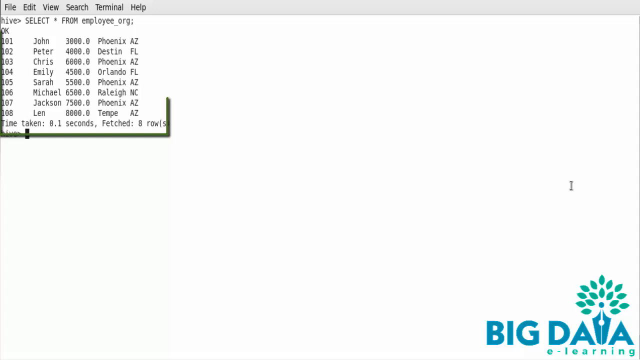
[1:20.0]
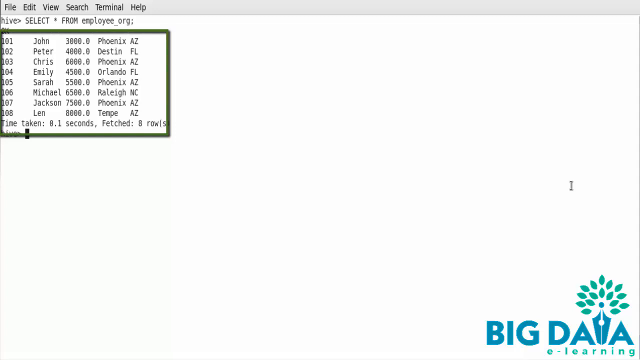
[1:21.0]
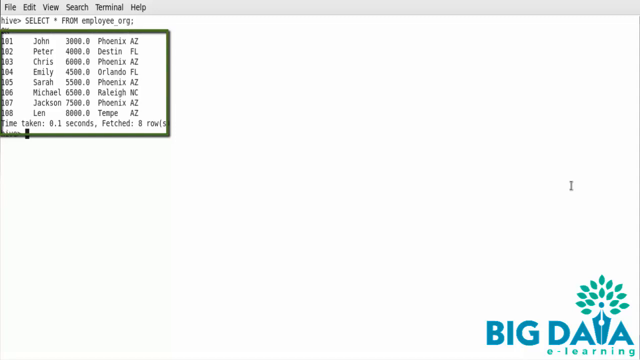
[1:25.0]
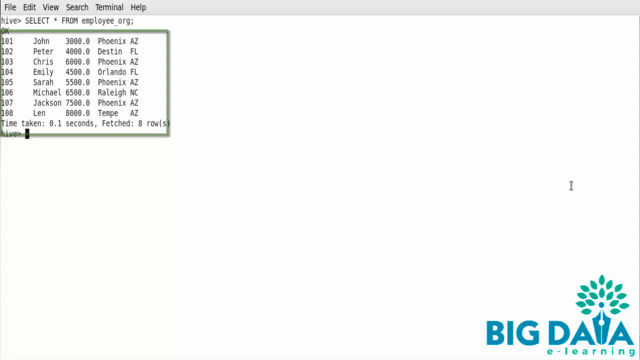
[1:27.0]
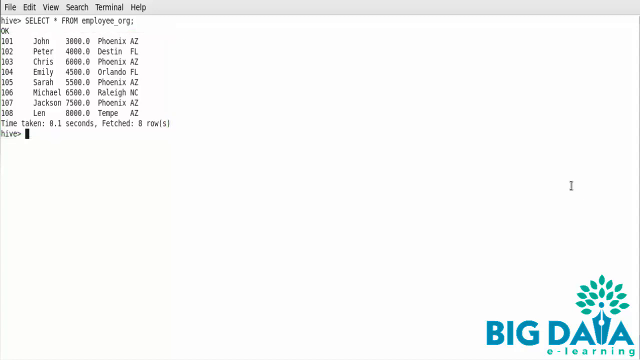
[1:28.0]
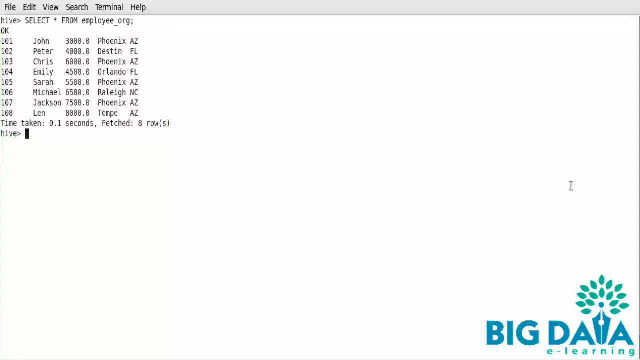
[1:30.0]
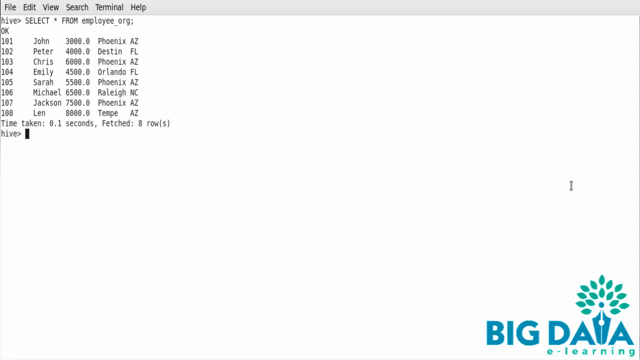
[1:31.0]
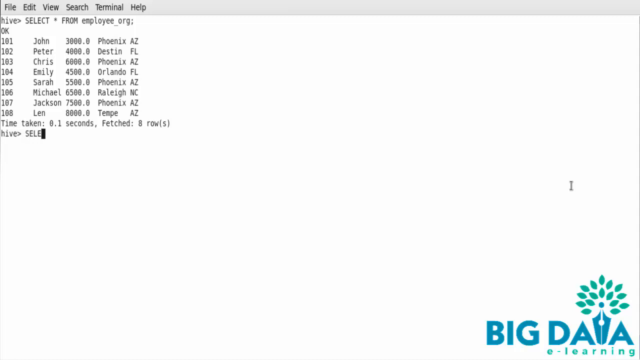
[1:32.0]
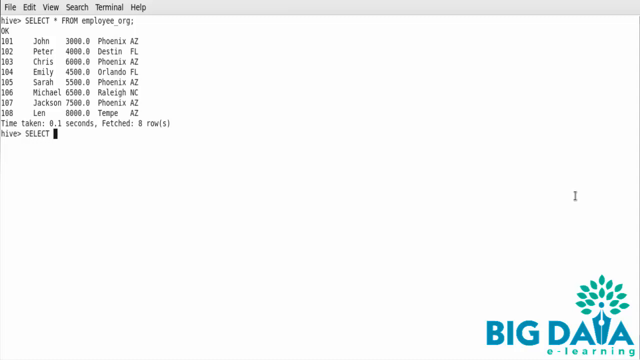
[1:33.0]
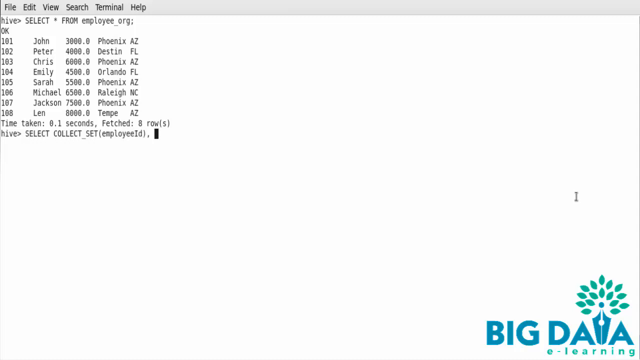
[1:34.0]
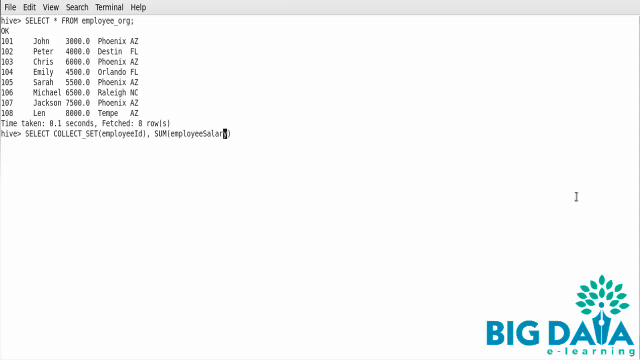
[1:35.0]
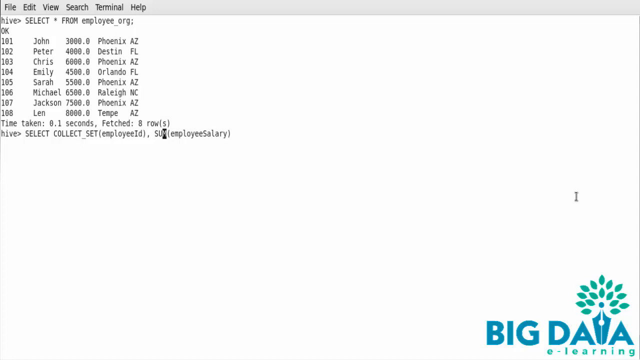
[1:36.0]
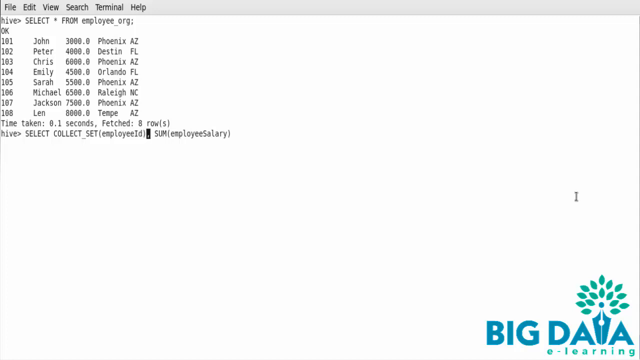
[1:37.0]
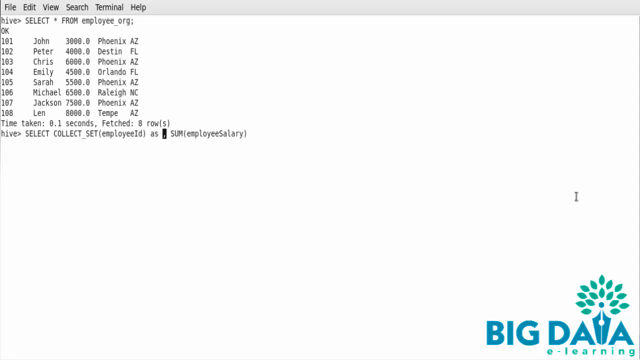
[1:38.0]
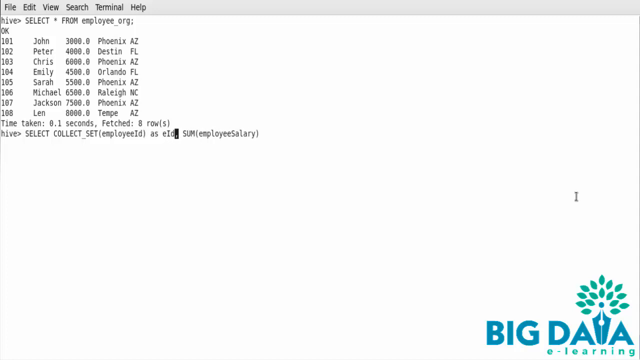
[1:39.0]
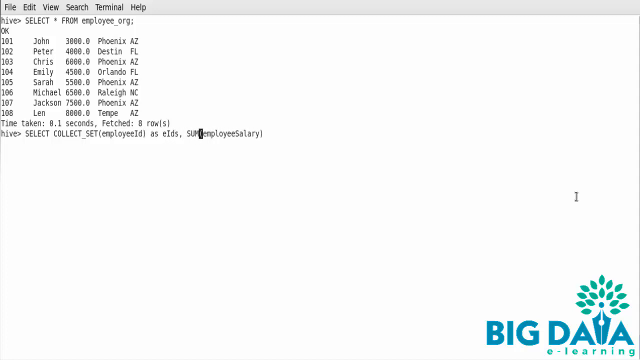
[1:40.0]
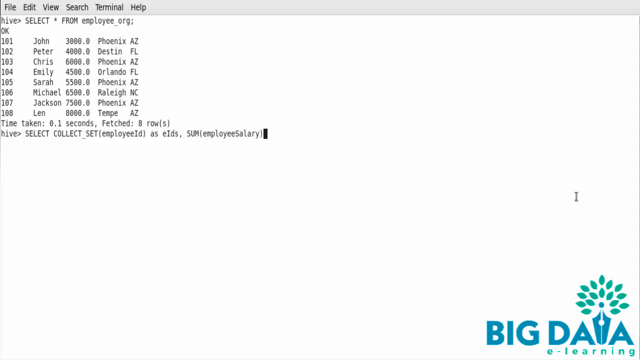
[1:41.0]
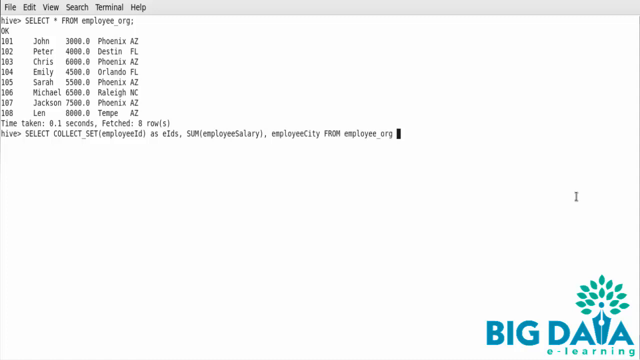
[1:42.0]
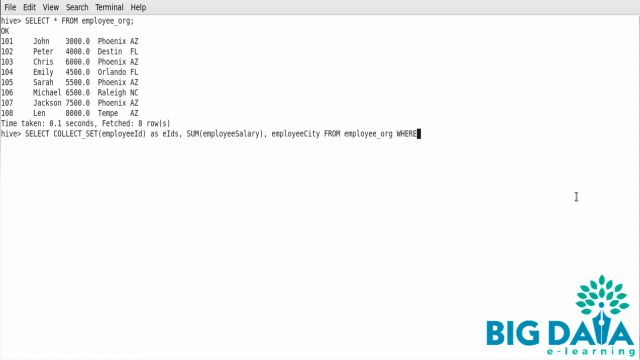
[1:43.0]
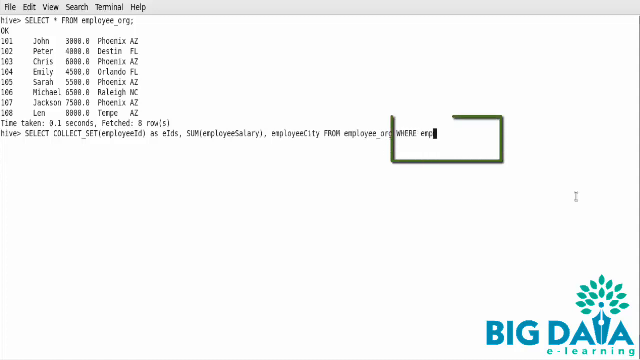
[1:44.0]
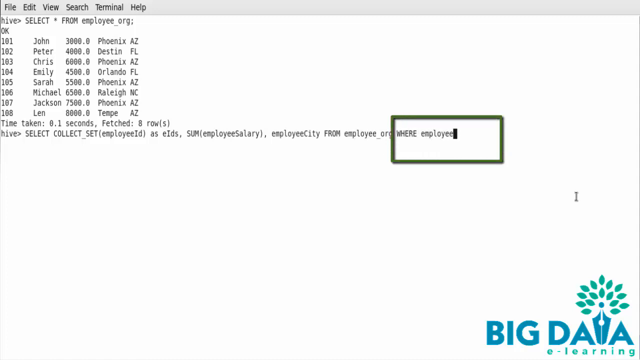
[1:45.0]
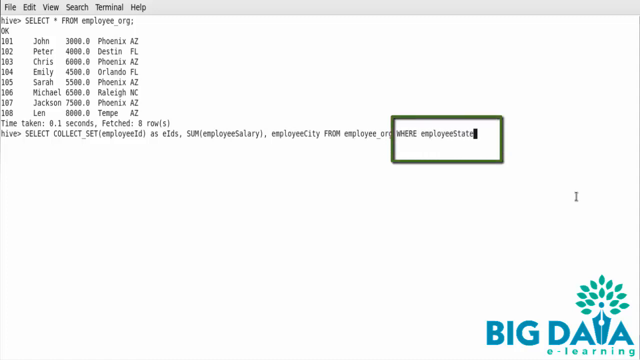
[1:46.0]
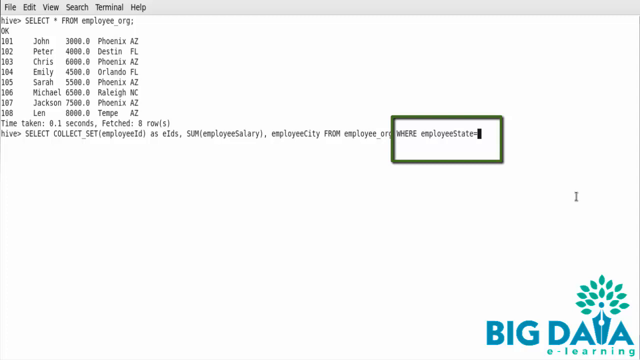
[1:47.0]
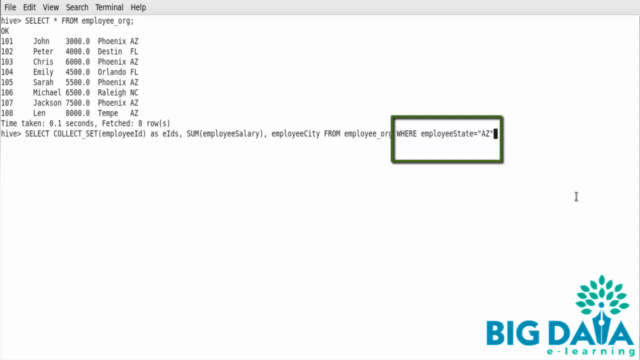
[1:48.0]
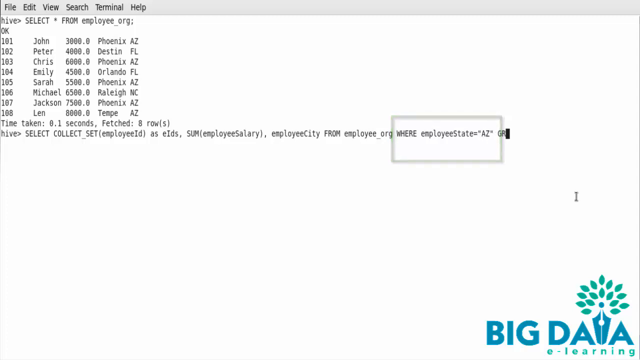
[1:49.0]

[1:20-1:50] Text commands are being typed on a computer screen. At the top is a navigation bar that reads "File, Edit, View, Search, Terminal, Help." Below this is a blank white screen with a command written at the top that says "Select from Employee _org". Below it is a list of names with numbers next to them ranging from 101 to 108, and next to each name is a city and state location. The names are highlighted in a dark green box. The dark green box disappears, and a cursor, which looks like a small black bar, types new directions at the bottom of the screen, entering commands into a script. One of the commands, "Where employee state =AZ," is also highlighted with a green box.